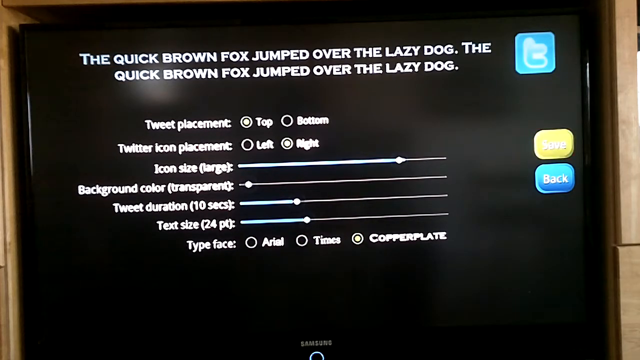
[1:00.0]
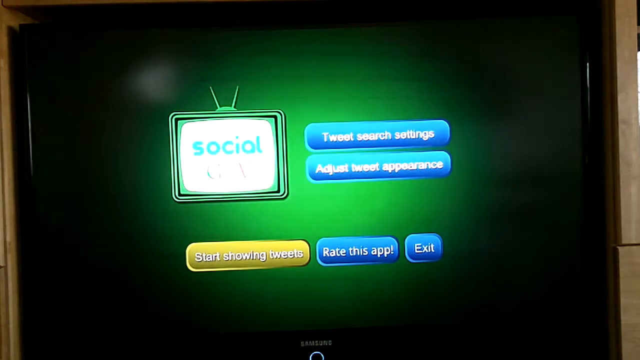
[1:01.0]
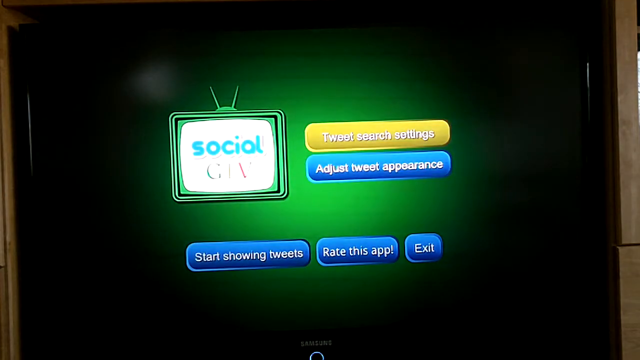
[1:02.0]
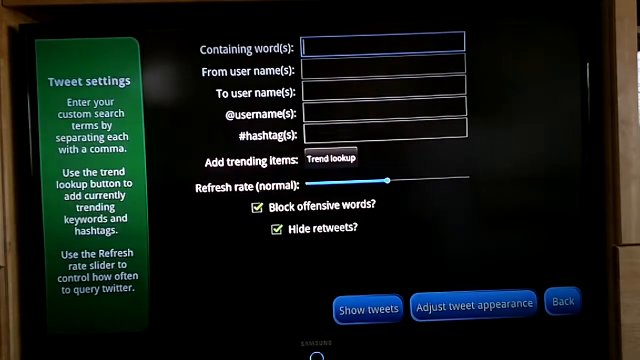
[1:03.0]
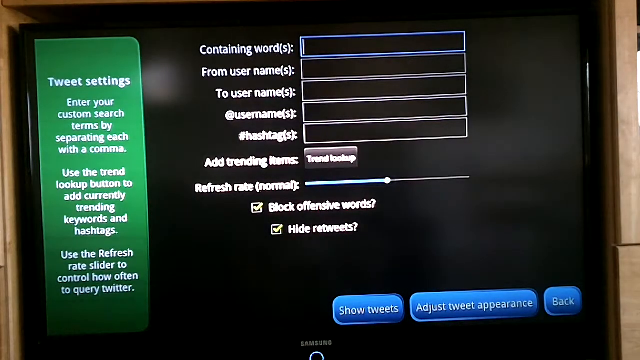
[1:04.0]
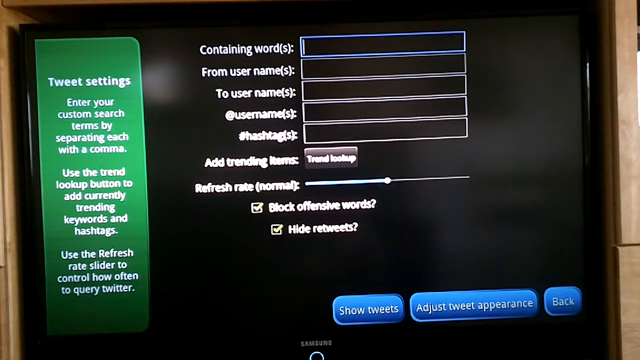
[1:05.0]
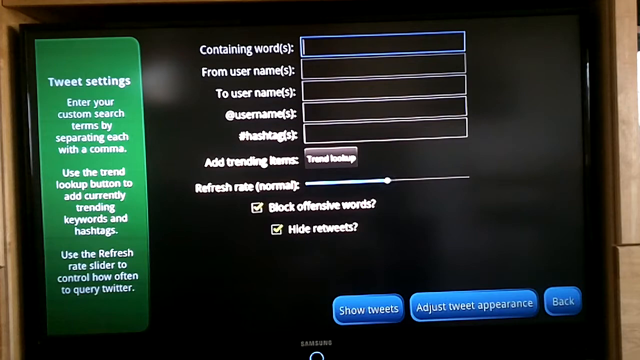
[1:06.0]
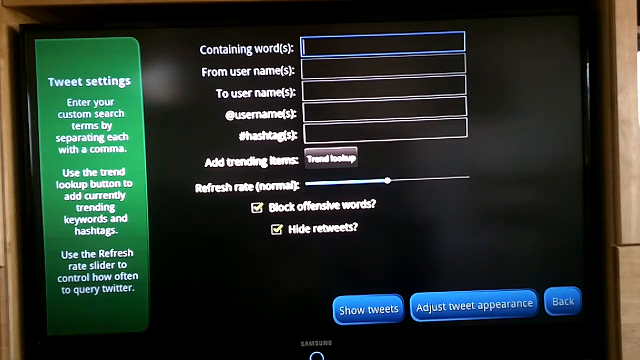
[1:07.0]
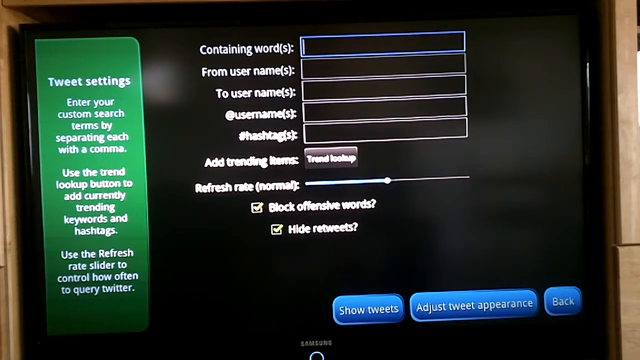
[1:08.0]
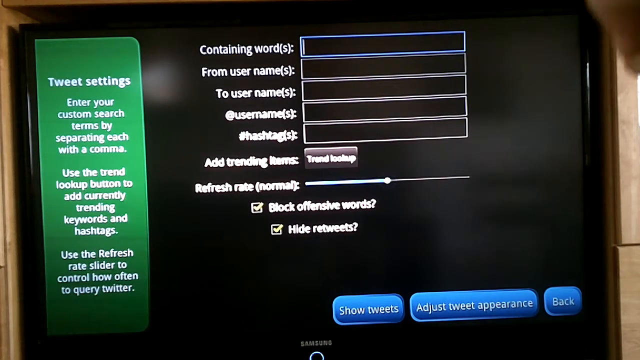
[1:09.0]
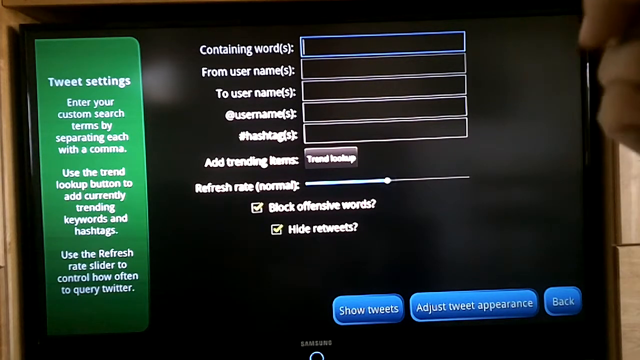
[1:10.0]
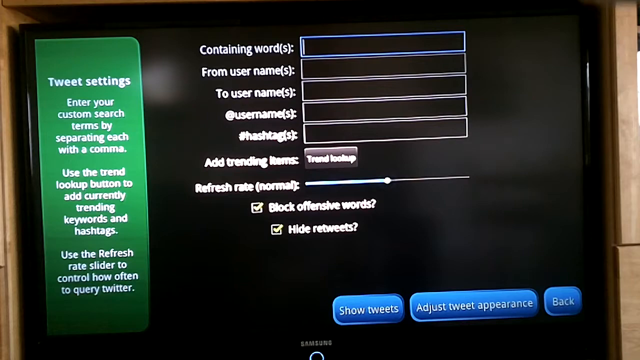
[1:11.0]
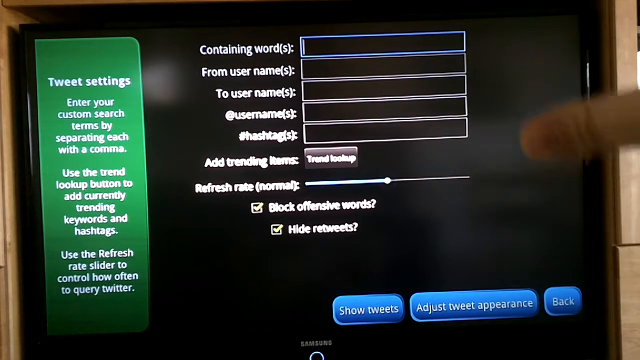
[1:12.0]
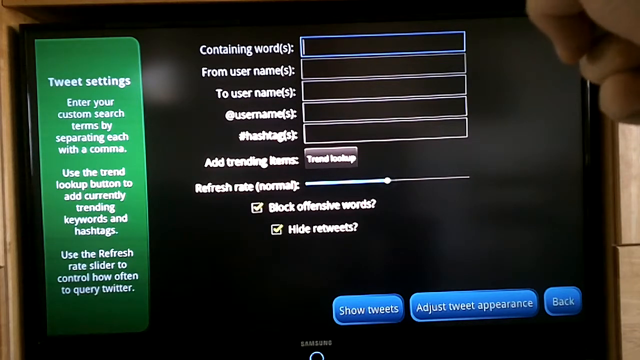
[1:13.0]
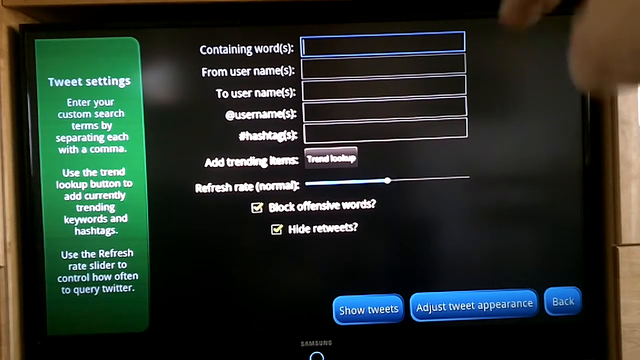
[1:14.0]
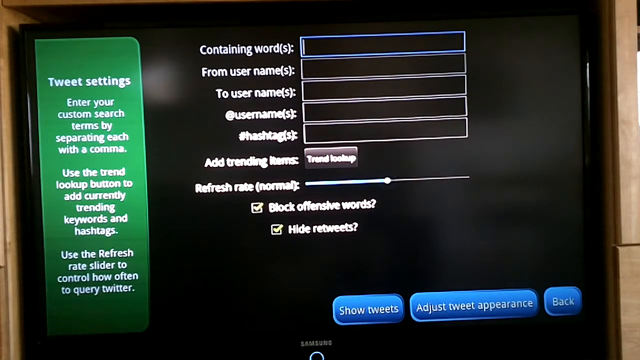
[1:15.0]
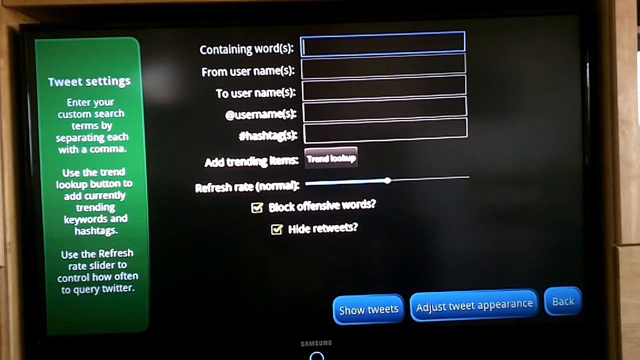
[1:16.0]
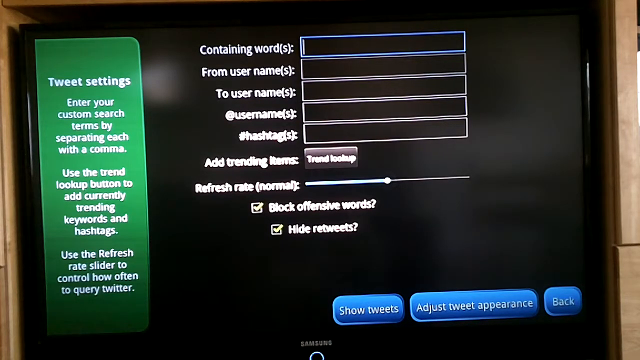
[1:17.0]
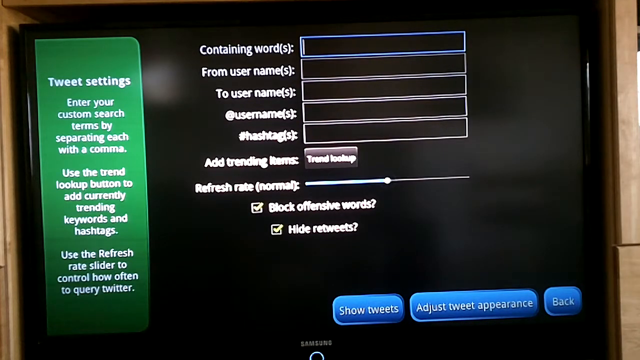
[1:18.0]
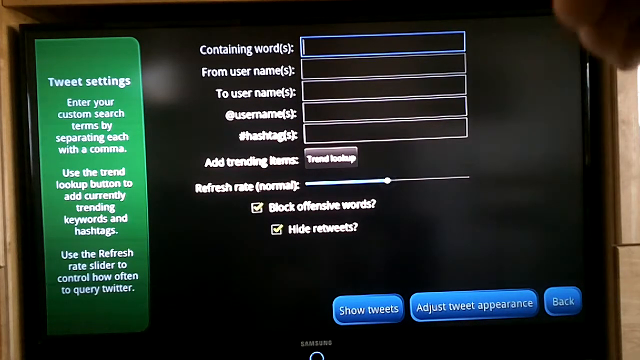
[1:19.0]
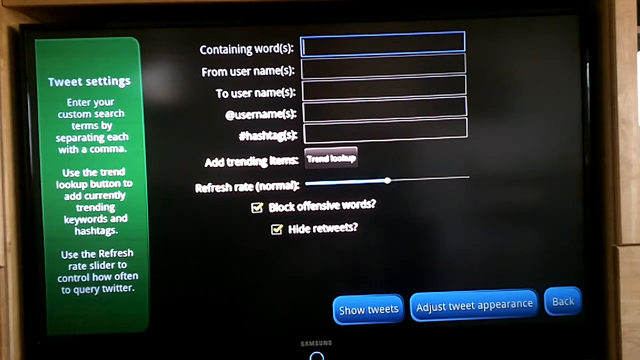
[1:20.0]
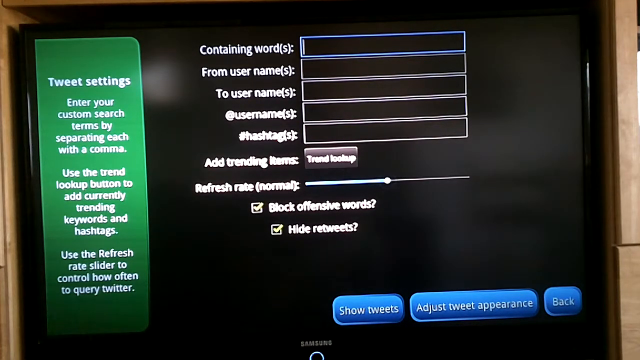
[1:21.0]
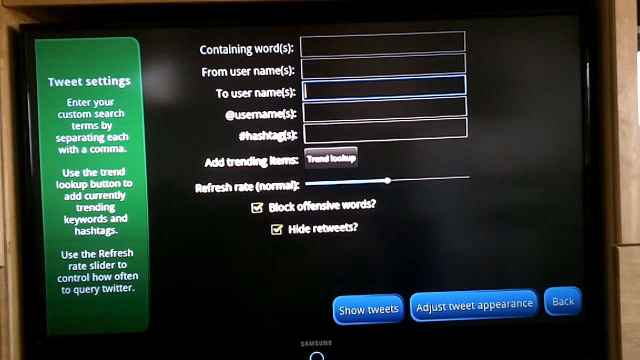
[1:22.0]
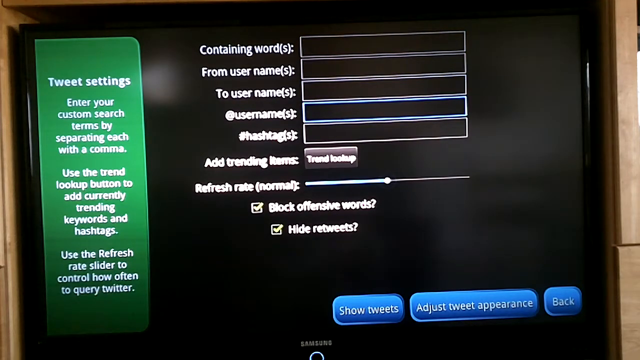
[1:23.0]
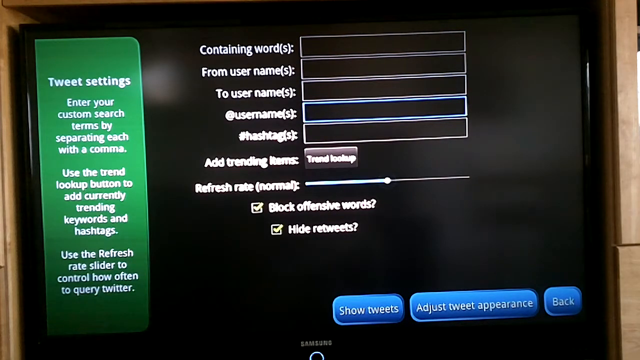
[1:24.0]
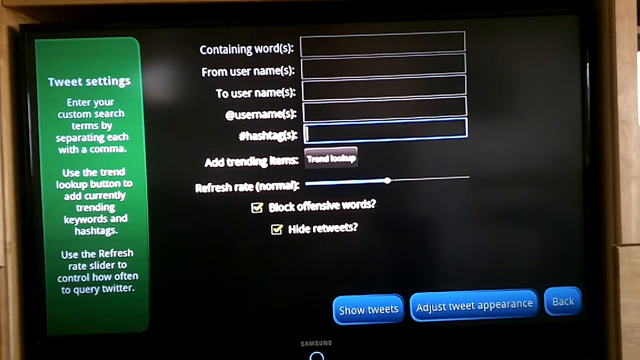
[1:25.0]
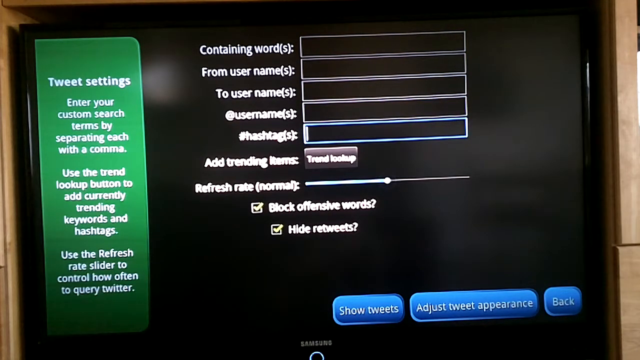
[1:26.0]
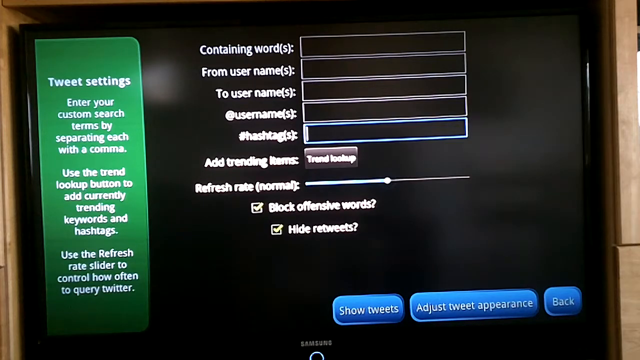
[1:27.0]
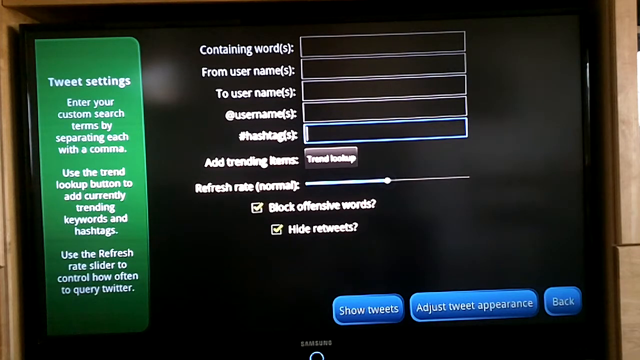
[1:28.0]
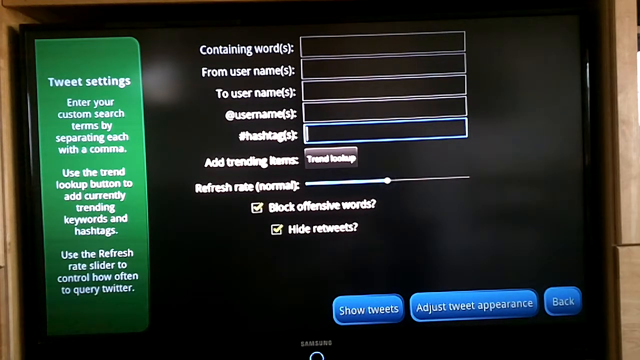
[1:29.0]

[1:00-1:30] A TV screen shows a pitch black background. White text at the top reads "the quick brown fox jumped over the lazy dog. The quick brown fox jumped over the lazy dog." Below are menu options: "tweet placement" is currently set to top, "Twitter icon placement" is set to right, "icon size" is at about four-fifths of its maximum, "background color transparent" is set almost to nil, "tweet duration" is set at 10 seconds, "text size" is set to 24pt, and "typeface" is set to copperplate. In the top right corner of the TV screen is a blue square with the letter T in it. Below that is a yellow button with white text that says "save", and below that button is a blue rectangle with white text that says "back". The TV then changes screens, showing "social" inside a green TV-like illustration on the left.